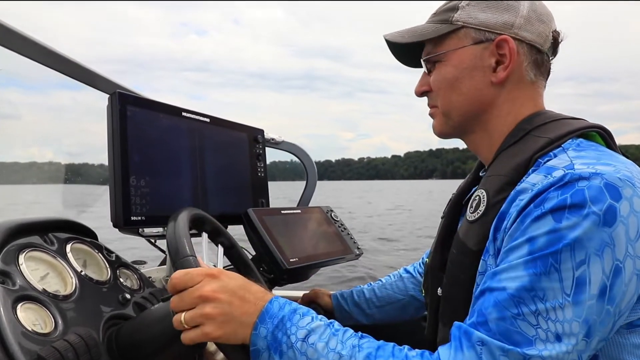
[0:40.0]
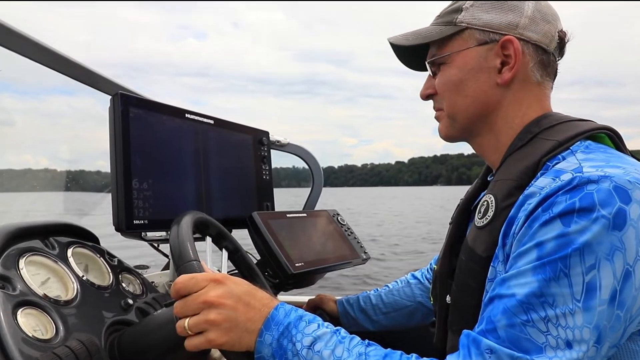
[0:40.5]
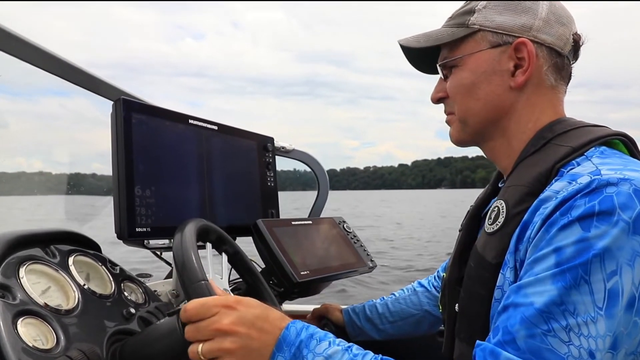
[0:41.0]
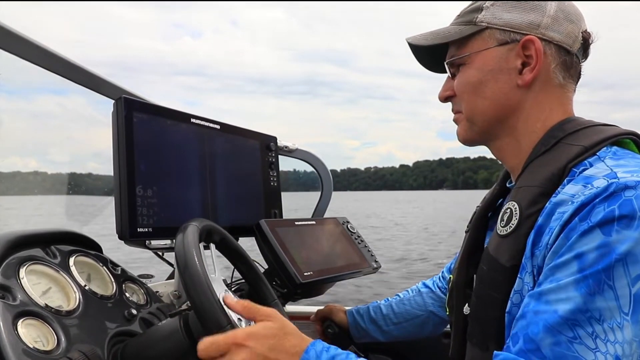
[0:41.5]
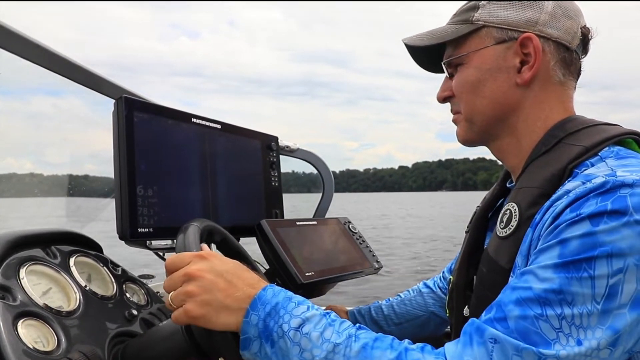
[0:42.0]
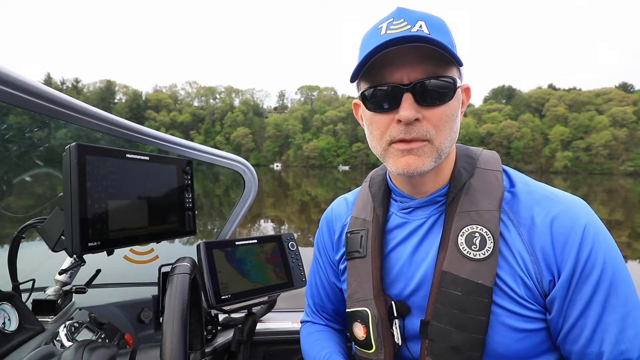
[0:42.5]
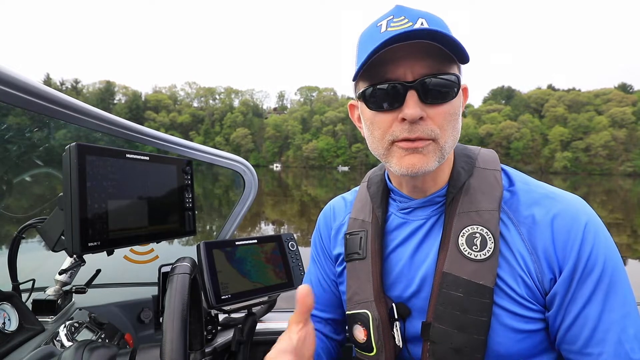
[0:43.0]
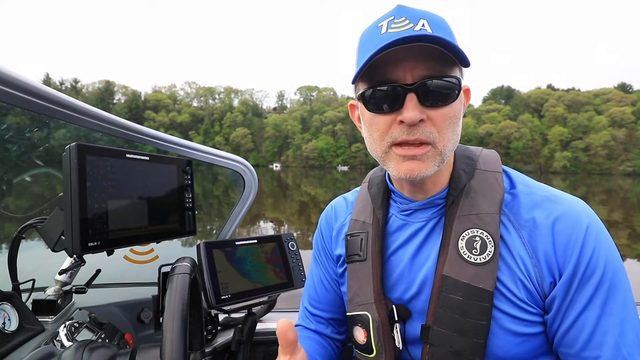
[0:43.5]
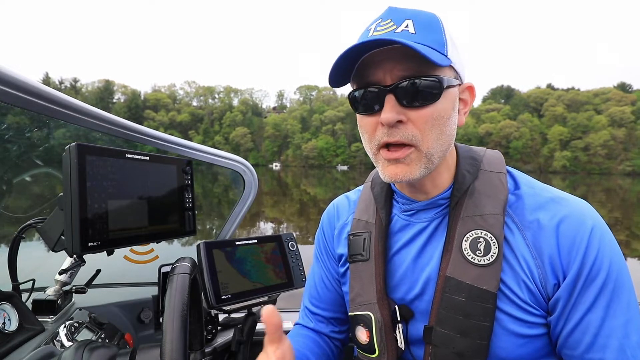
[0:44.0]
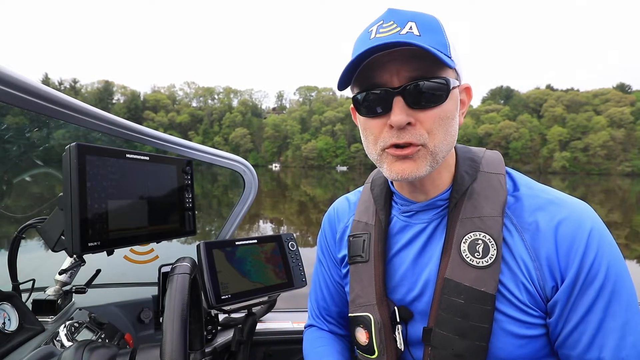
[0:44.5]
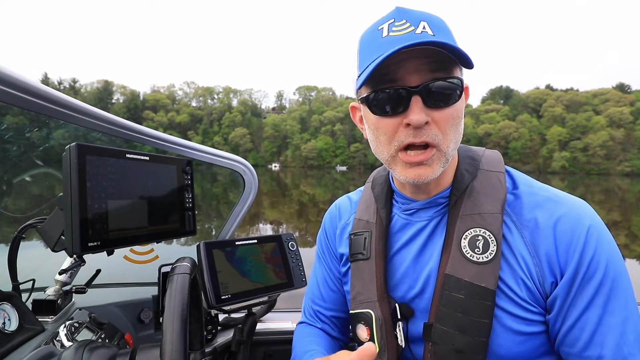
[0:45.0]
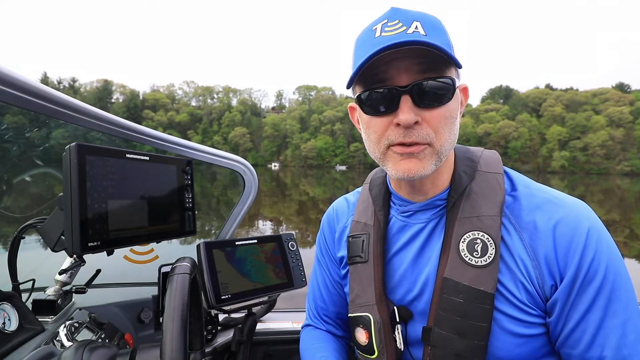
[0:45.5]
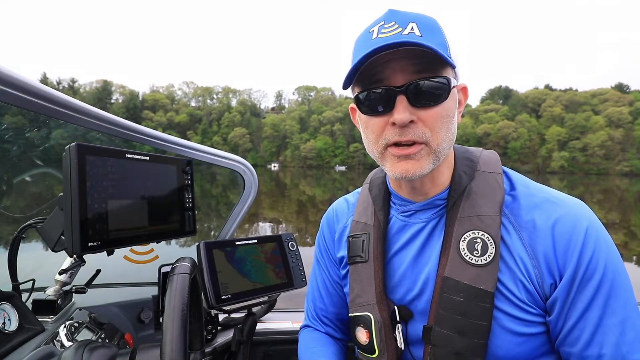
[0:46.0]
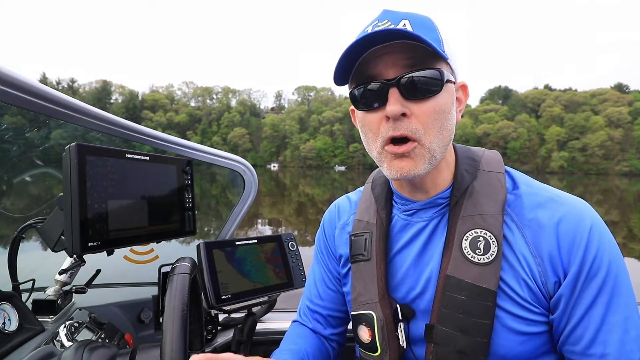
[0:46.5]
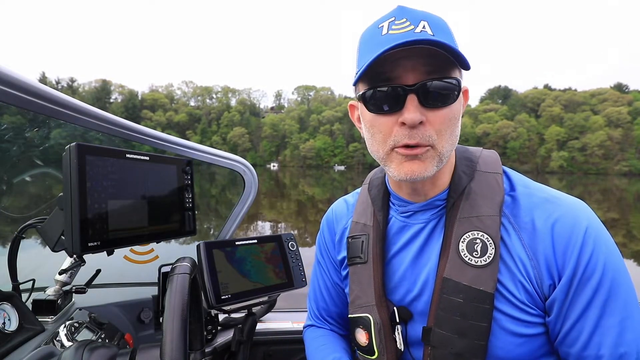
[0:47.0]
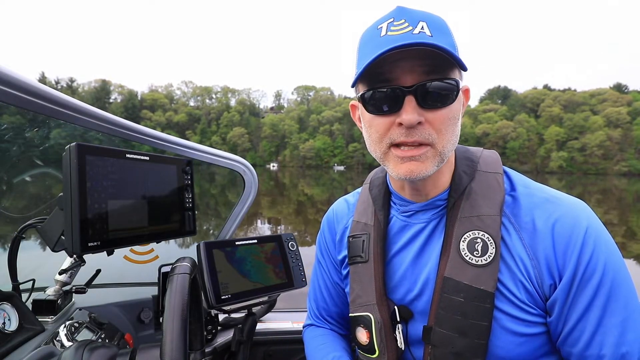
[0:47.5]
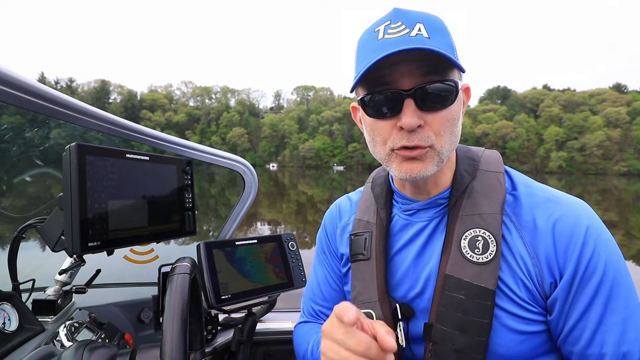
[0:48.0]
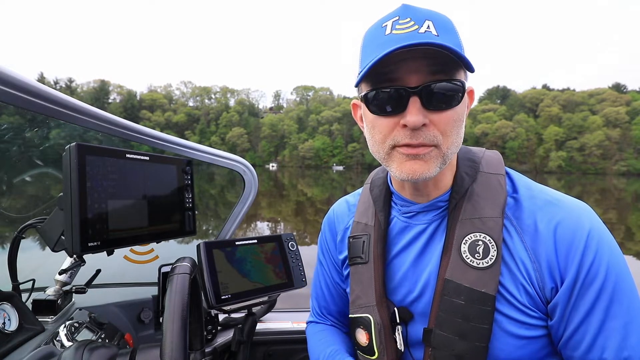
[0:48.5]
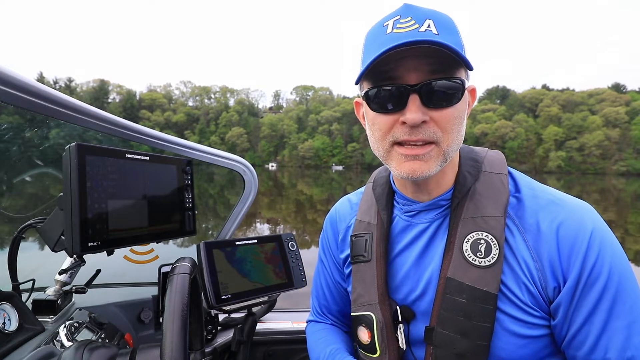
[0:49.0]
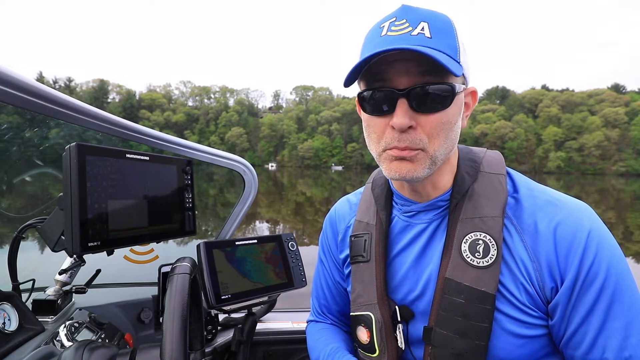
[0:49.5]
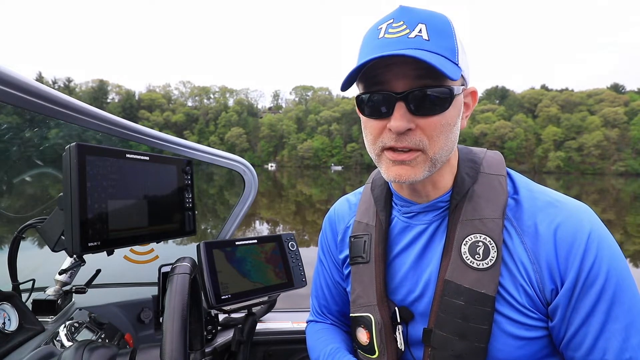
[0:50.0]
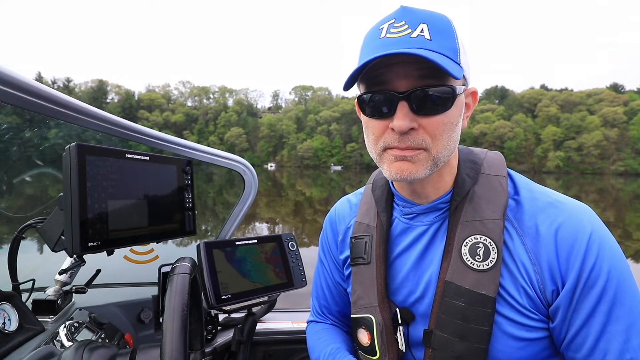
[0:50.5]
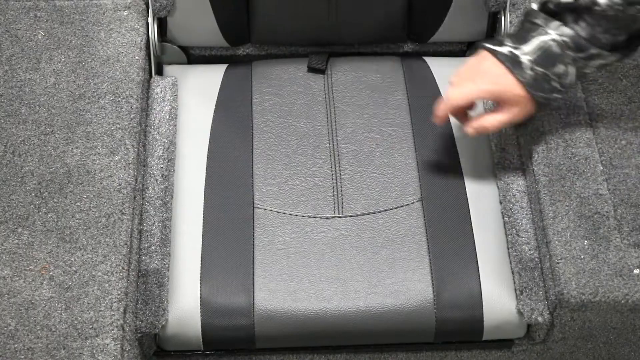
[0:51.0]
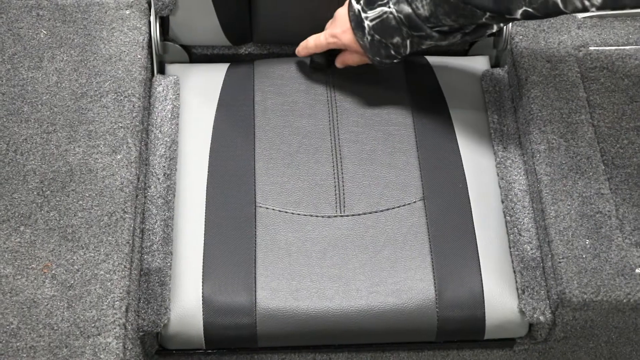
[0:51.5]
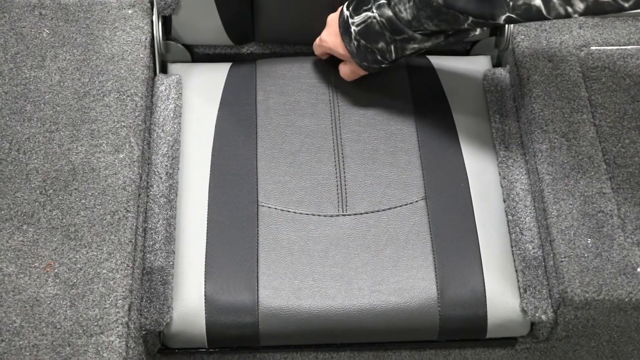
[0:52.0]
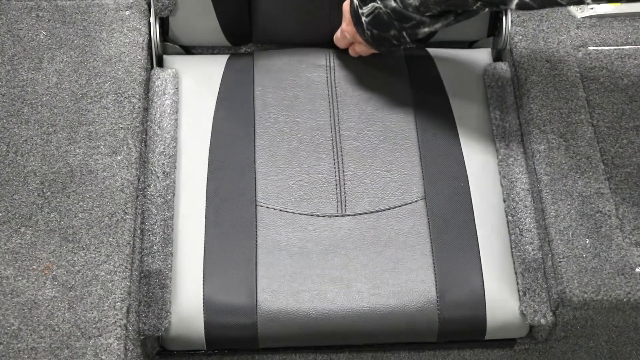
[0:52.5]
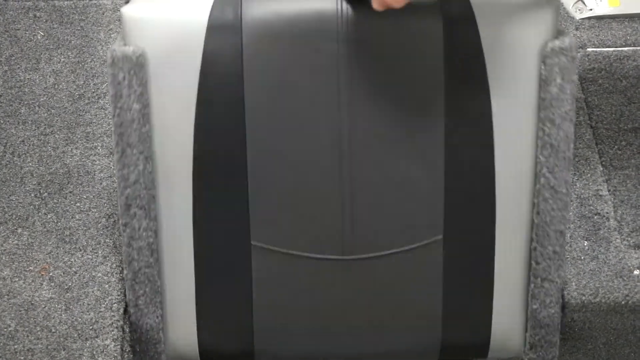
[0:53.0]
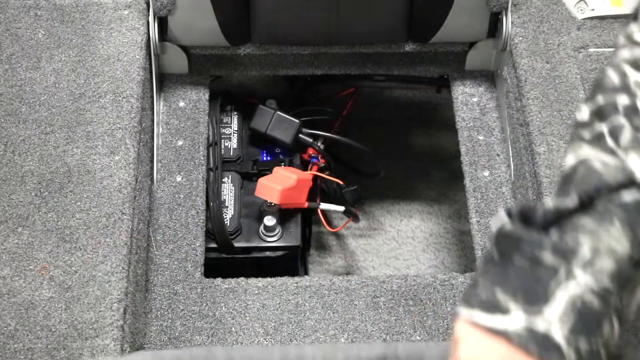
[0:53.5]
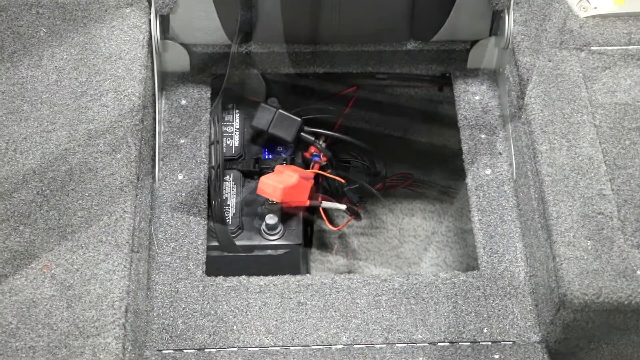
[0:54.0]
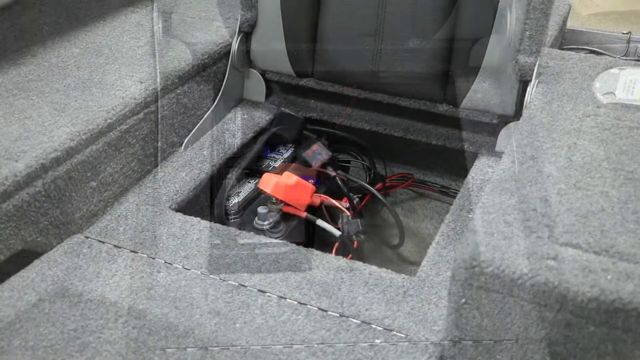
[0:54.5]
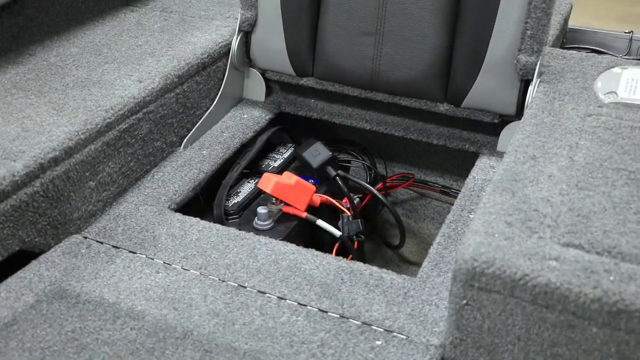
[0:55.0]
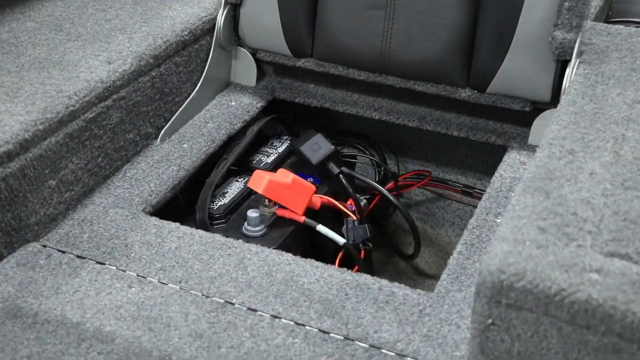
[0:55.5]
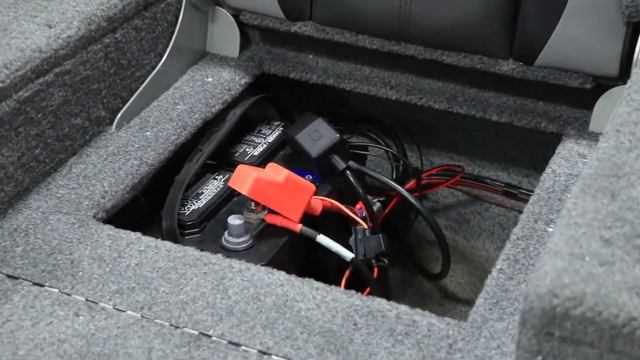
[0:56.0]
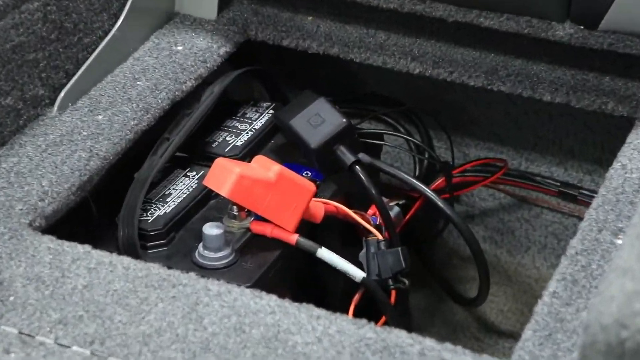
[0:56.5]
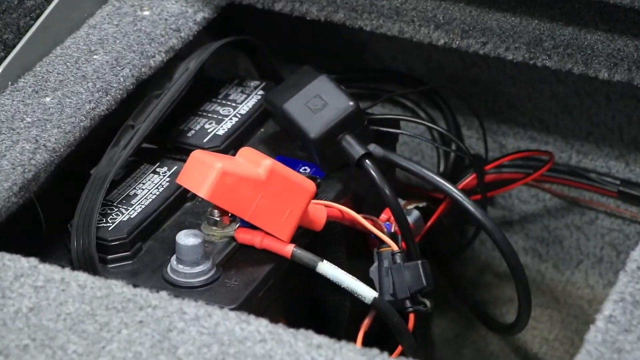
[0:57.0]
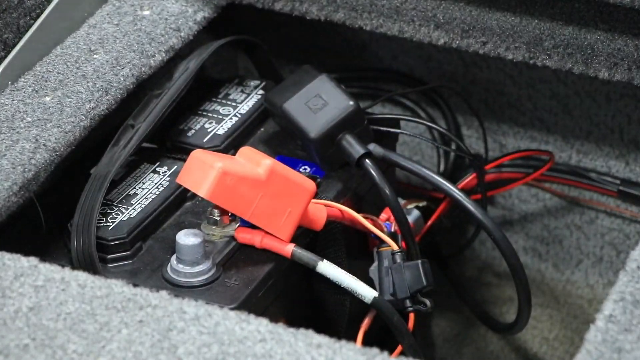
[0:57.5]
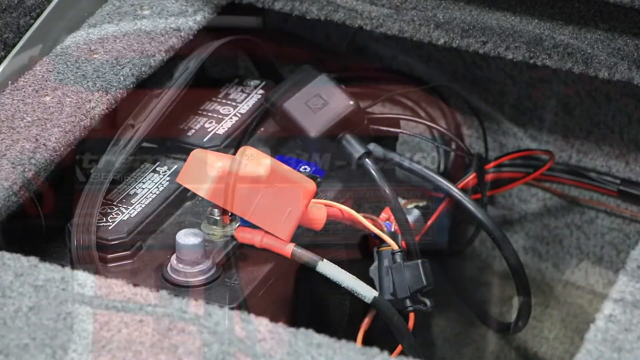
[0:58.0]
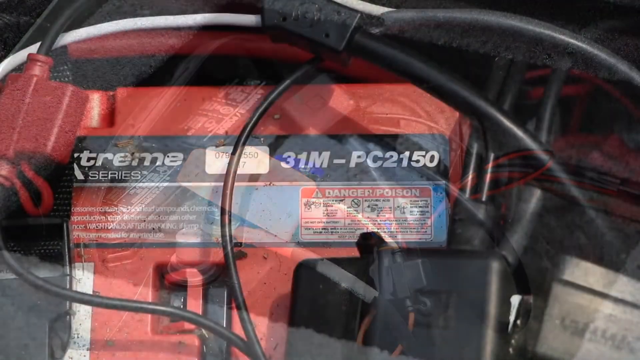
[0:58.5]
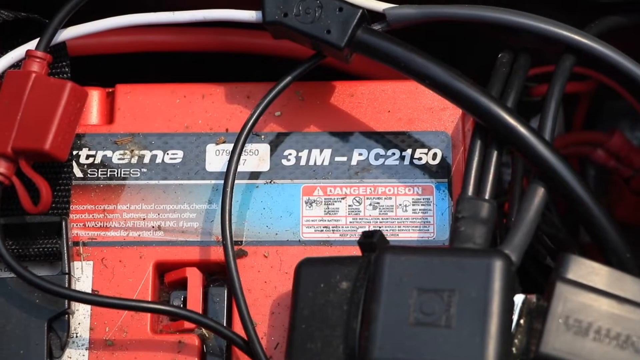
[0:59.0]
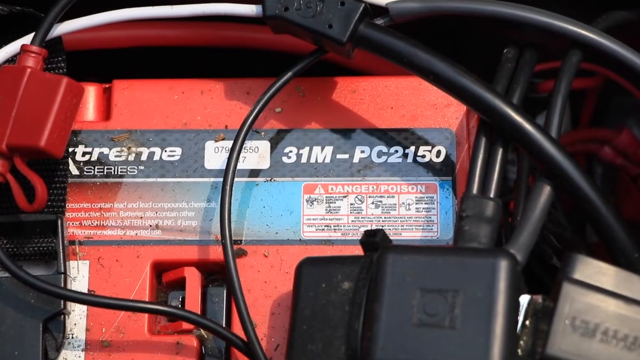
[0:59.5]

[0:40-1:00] A side view shows the water and lake area. A man wearing a tannish gray baseball cap and a light blue and dark blue speckled patterned shirt that appears to have some sort of scale pattern holds the steering wheel in his left hand, with his right hand on the shifter on the right side of the boat. He looks toward the left and forward in front of him. The video transitions back to the original man in the boat in the solid blue shirt, who speaks while looking directly into the camera and gestures with his right hand, his thumb coming in and out of view. His left hand raises up into view and then falls back down out of view, while his right hand gestures and briefly points toward the camera. The video then transitions to a shot of the floorboard and under the seat, showing the battery compartment under one of the seats, surrounded by gray carpet. The camera zooms in to the battery, showing the information on the battery itself.